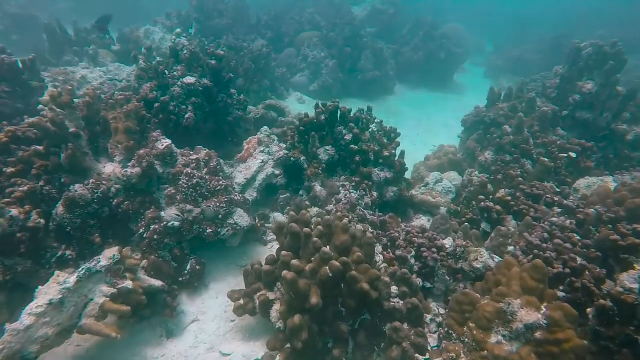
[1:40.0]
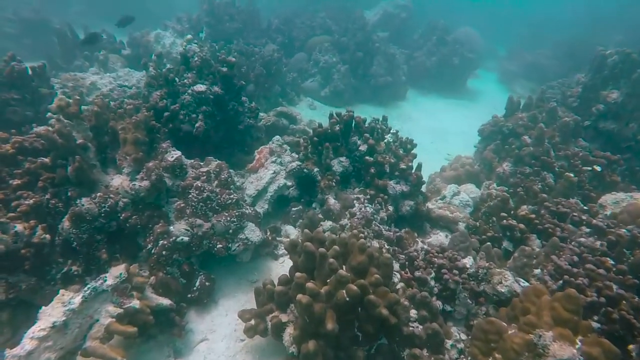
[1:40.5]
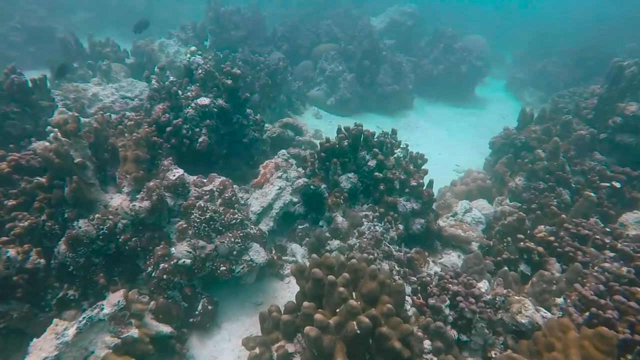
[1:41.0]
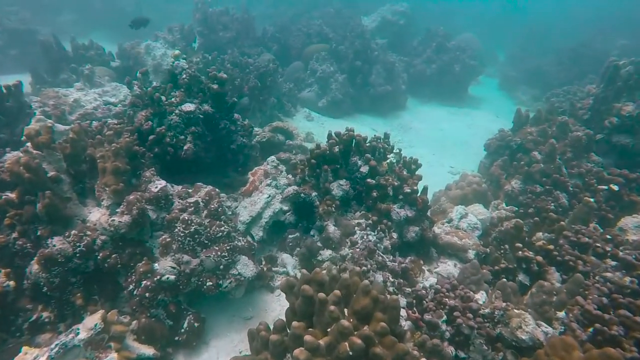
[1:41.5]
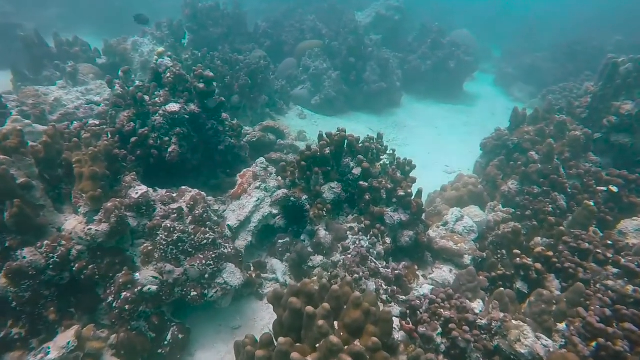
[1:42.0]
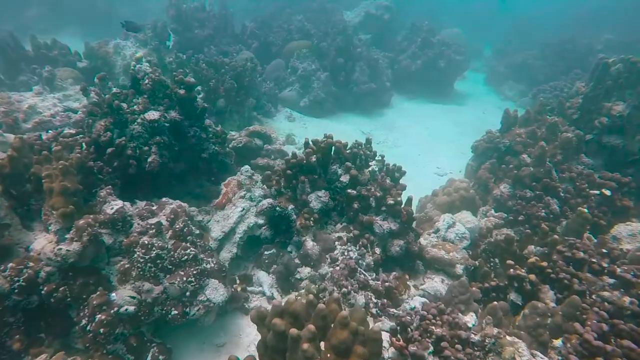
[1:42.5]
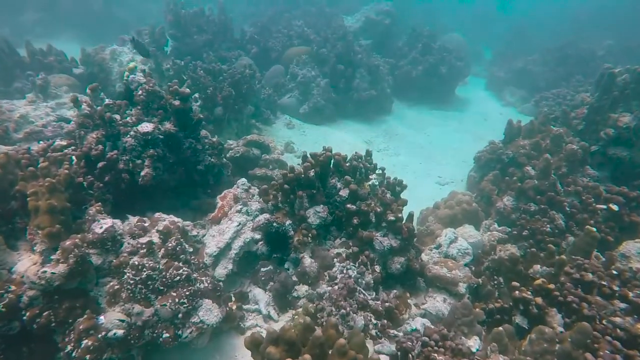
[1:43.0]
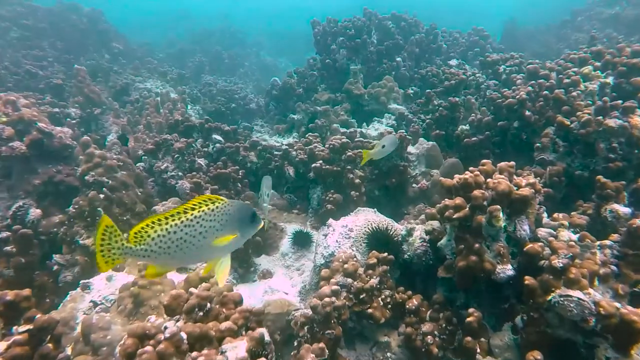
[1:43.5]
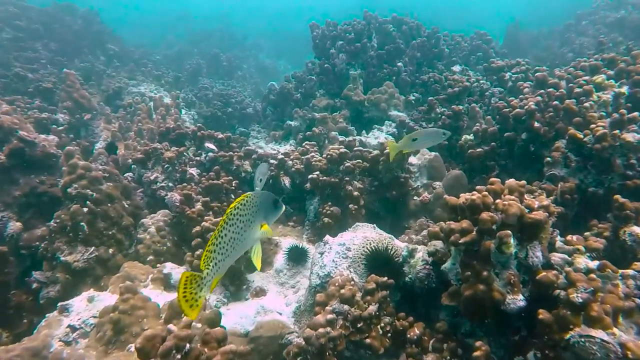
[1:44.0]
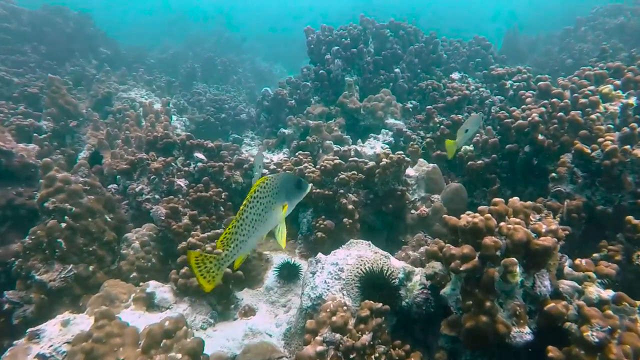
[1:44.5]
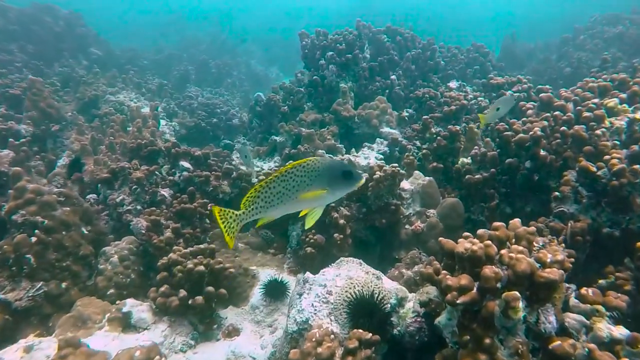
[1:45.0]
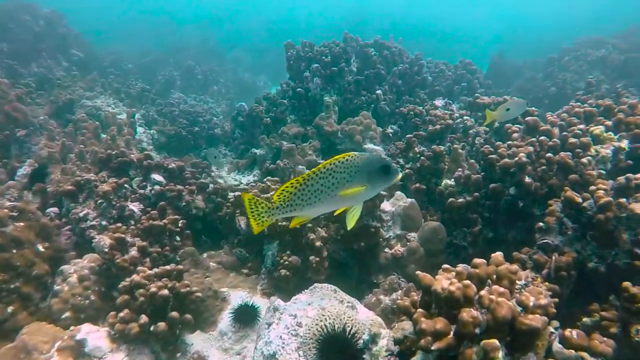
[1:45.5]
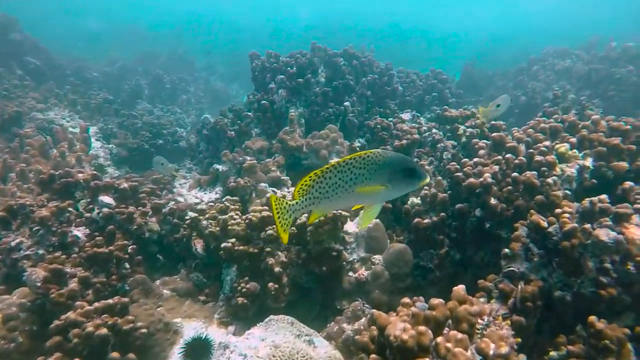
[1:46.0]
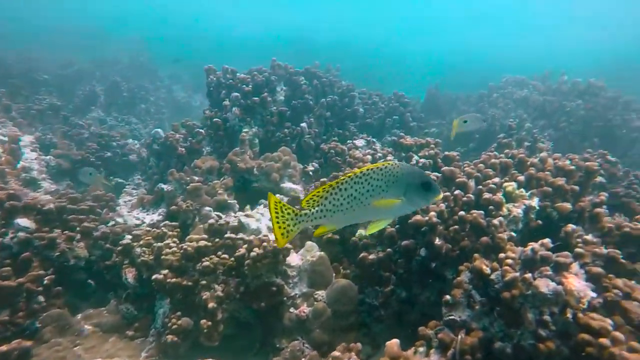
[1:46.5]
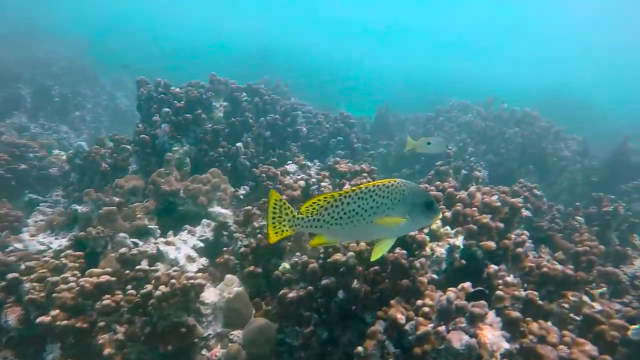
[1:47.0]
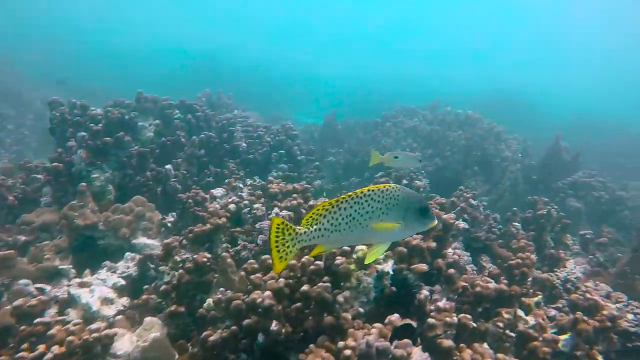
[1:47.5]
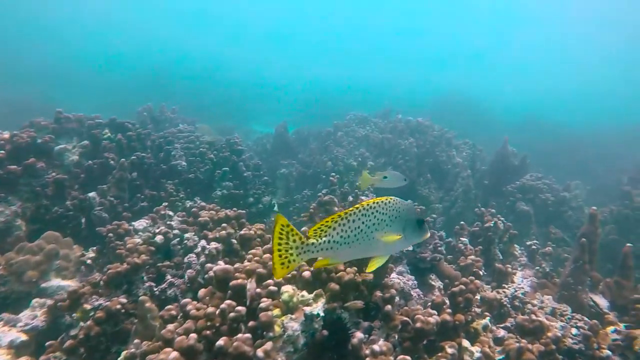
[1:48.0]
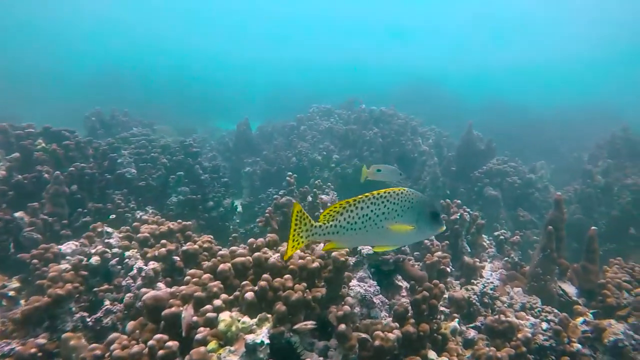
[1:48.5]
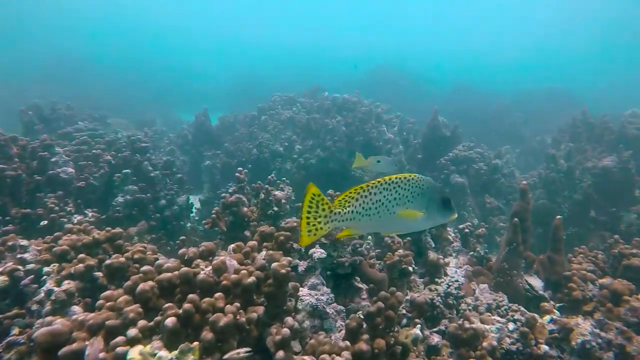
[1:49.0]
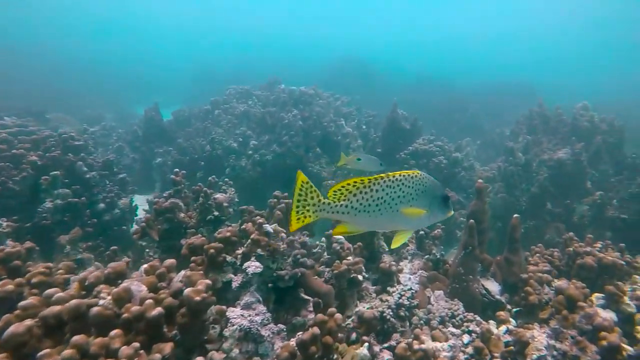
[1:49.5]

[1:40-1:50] More shots show brownish-reddish coral reefs with very light brown sand on the ocean floor. Some fish swim around in the background in the top left-hand corner. Another shot shows reddish-brown coral reefs with white calcification, like rocks, in the middle. More fish are visible, and three fish swim by that all look to be the same species. They are silver, dark silver on the head and light silver on the belly, with black dots along the top half of the body and the back fin. The top edges of their body and fin are neon yellow, making the fish stand out as if they are glowing.